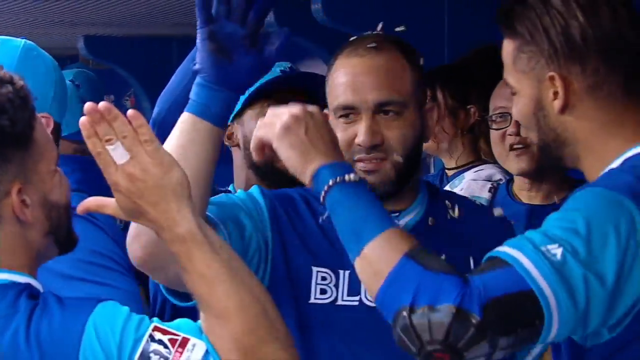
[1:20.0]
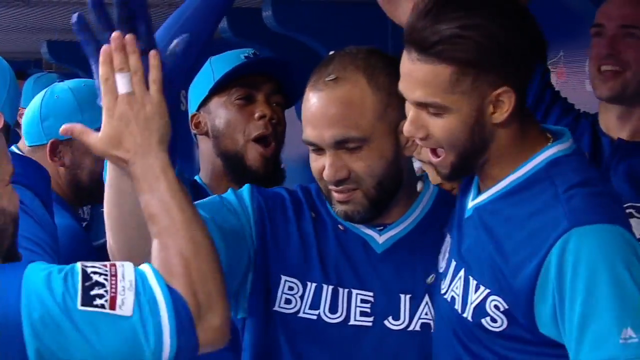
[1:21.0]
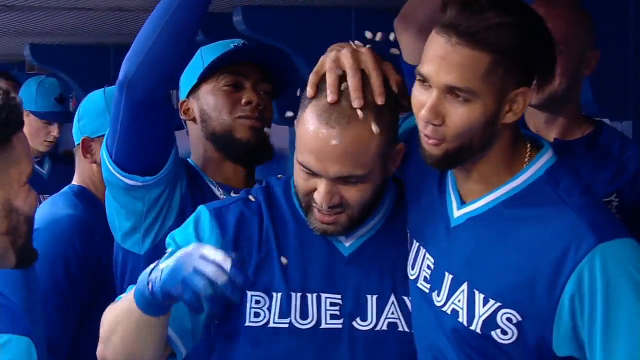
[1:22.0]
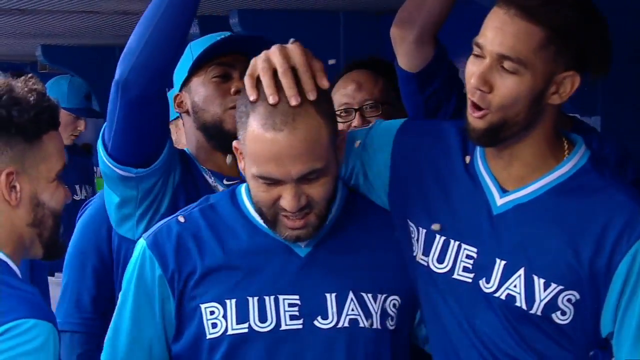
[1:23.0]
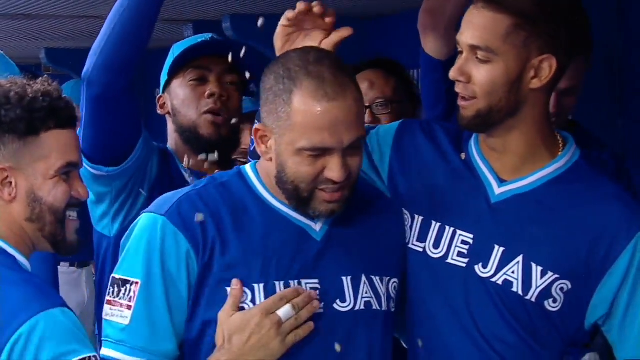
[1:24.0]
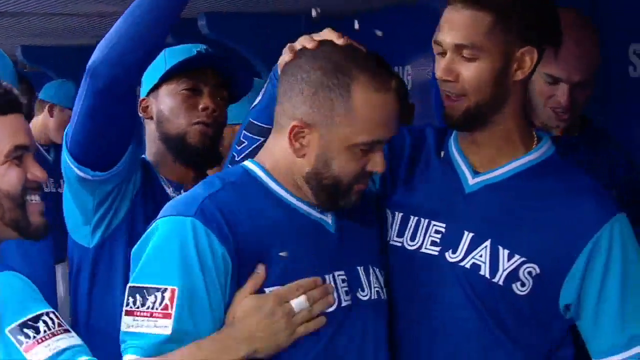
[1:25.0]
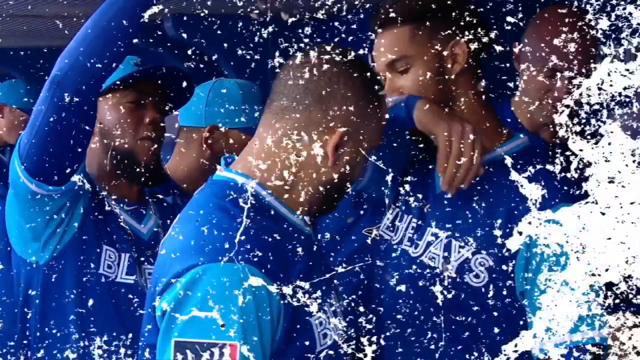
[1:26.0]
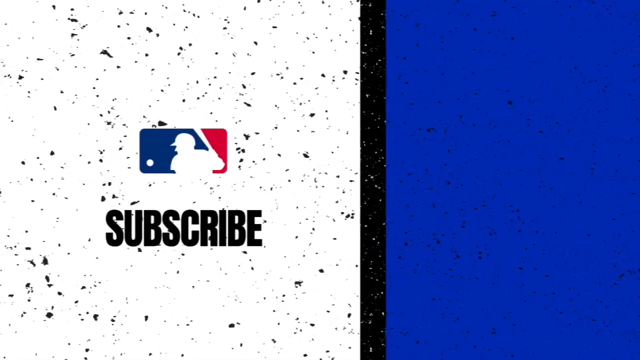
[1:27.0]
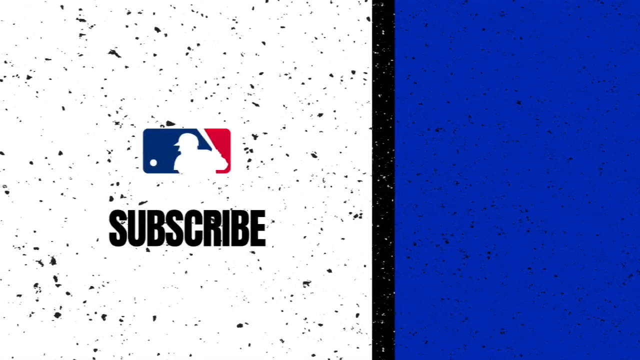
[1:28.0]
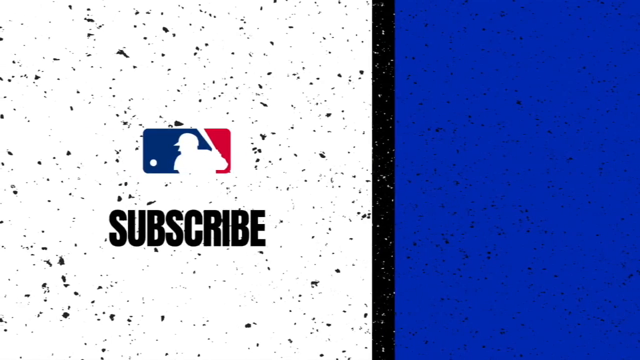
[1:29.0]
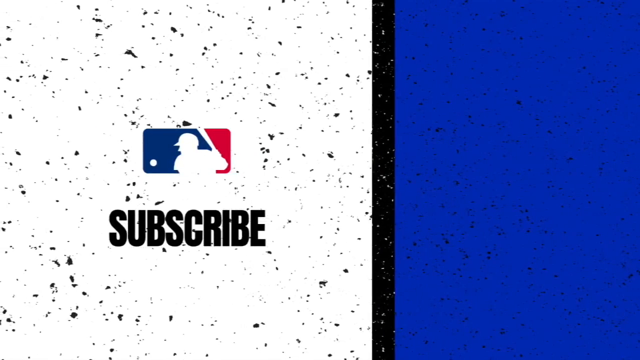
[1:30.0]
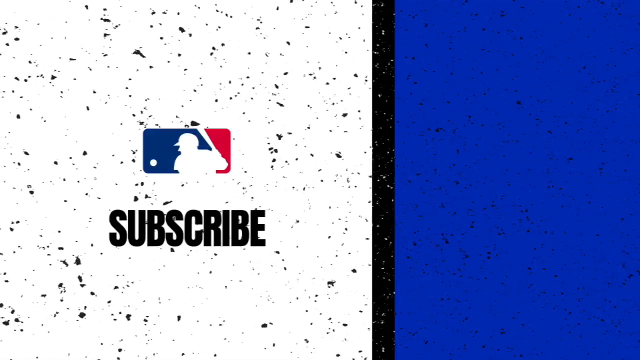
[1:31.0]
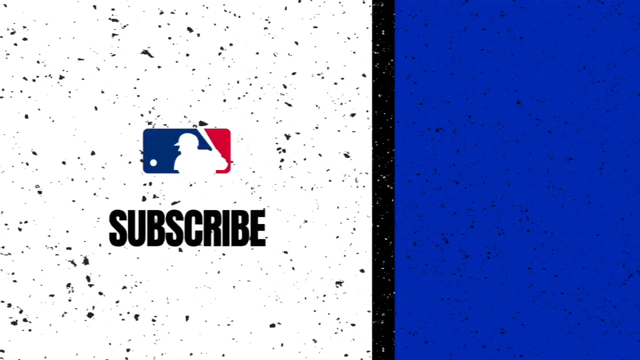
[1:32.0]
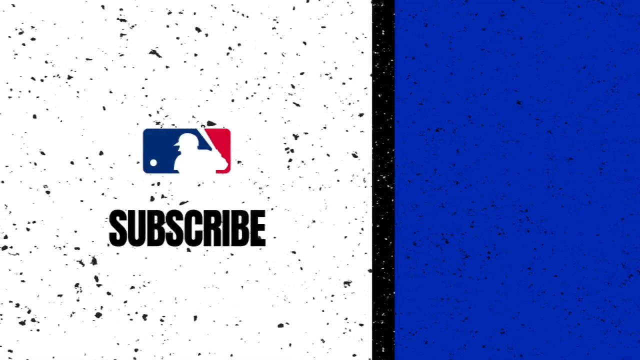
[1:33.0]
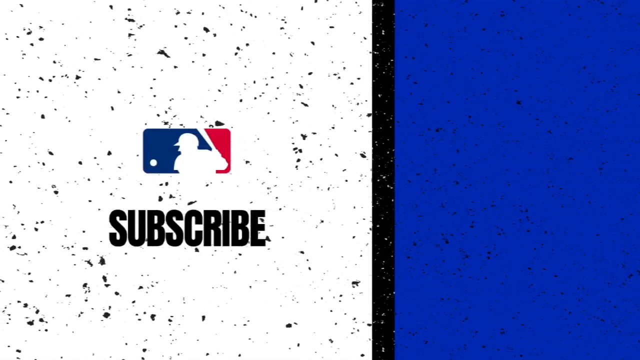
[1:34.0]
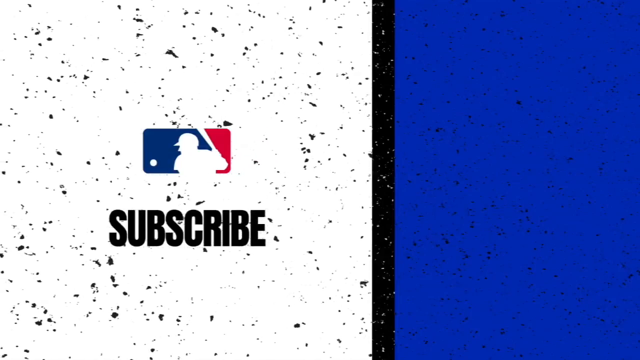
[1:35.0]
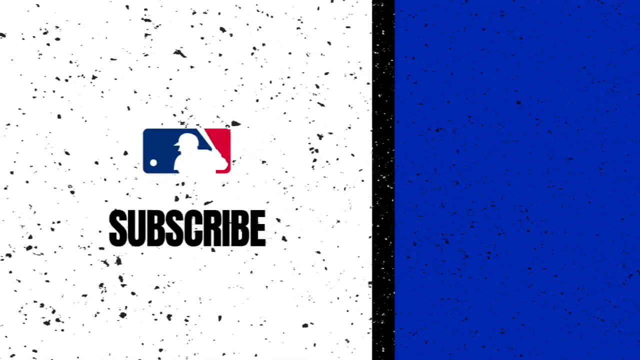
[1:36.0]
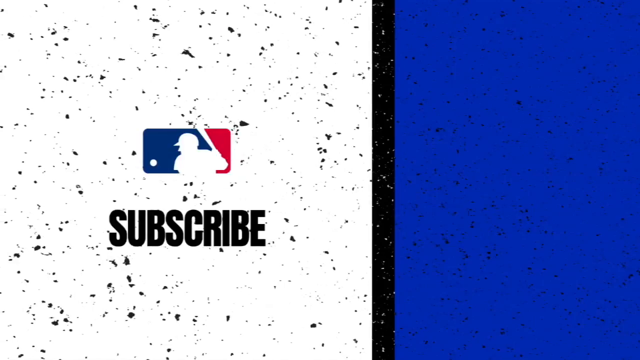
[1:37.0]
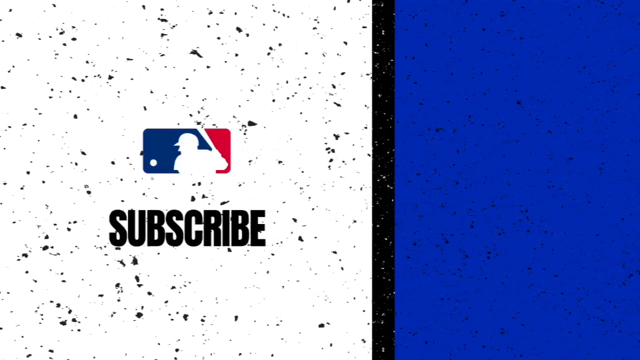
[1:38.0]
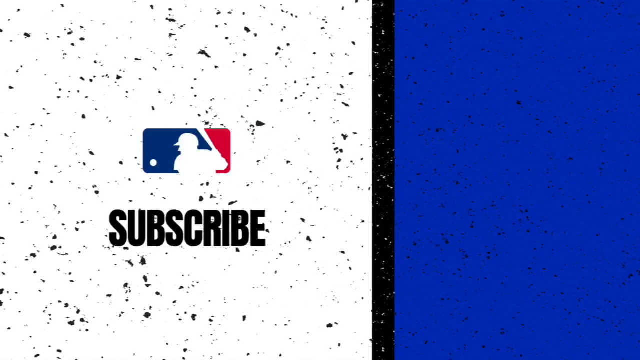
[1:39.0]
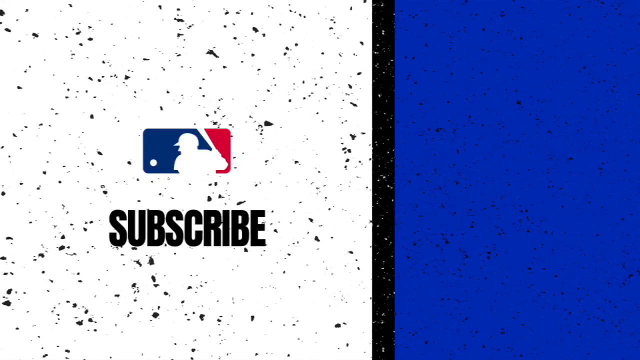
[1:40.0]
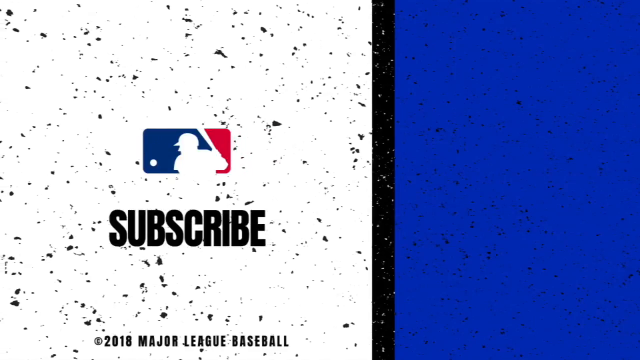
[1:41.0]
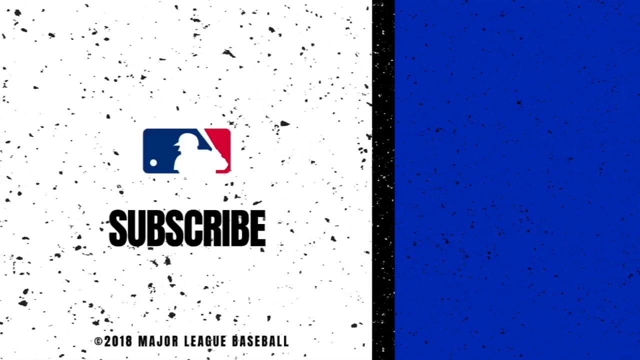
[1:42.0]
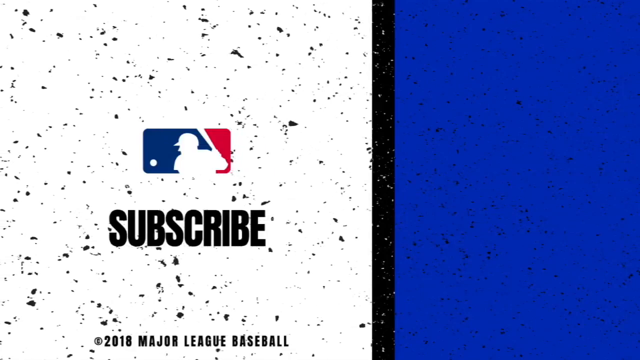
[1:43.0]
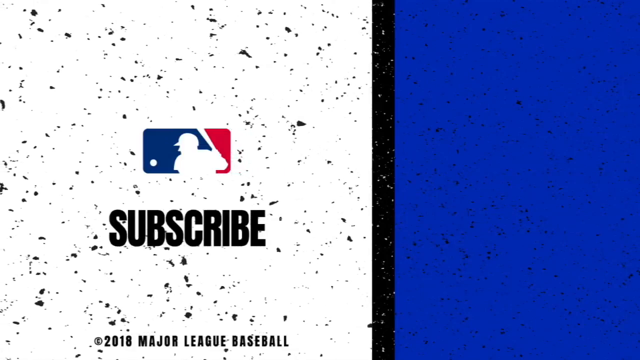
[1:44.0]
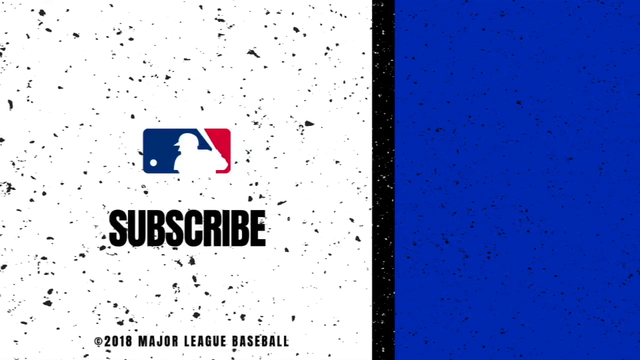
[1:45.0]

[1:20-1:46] The Blue Jays celebrate in their dugout, and someone throws a little confetti on player number eight, who has just come back from running the bases after his home run. He appears to have very short African American hair, and he is smiling. A page then pops up that says "subscribe" and shows the MLB emblem: a white ball in the lower left corner, an outline cut of a person playing baseball, with the right side red and the left side blue, and what looks like paint or confetti sprinkled in that area. The background is white, "subscribe" is written in black, there is a skinny black rectangle toward the right, and a darker royal blue rectangle at the far right.